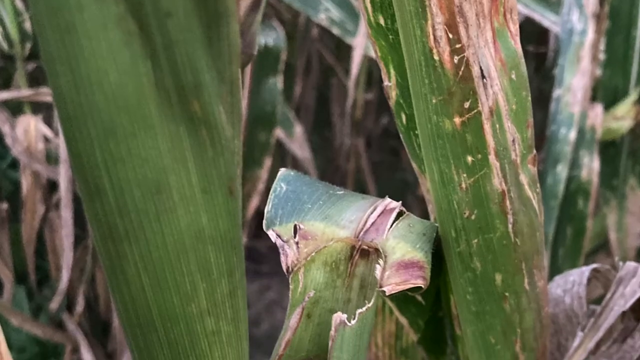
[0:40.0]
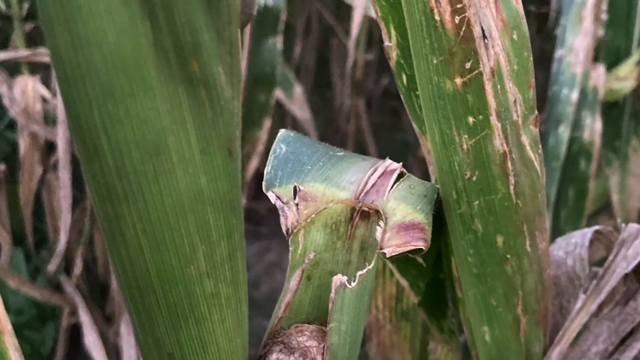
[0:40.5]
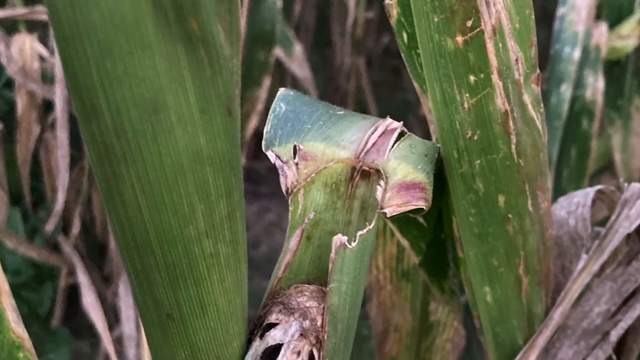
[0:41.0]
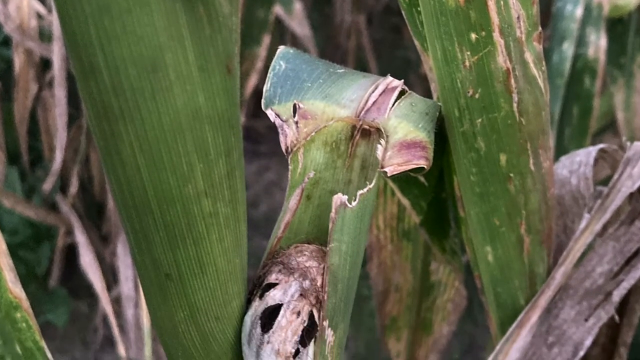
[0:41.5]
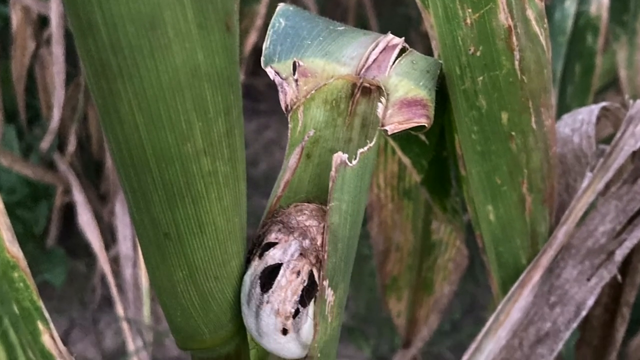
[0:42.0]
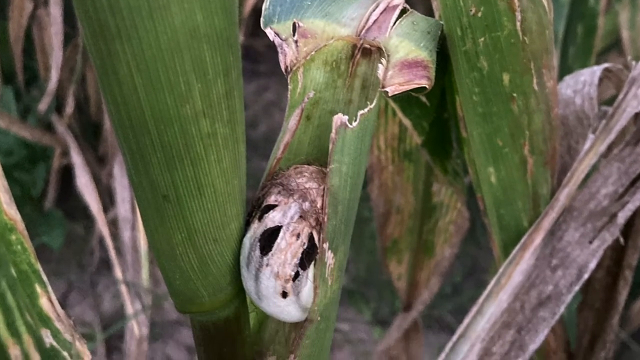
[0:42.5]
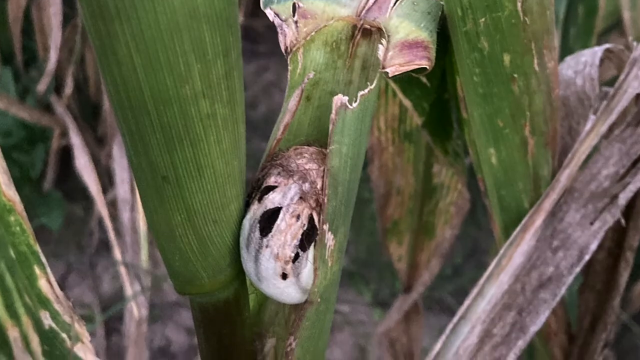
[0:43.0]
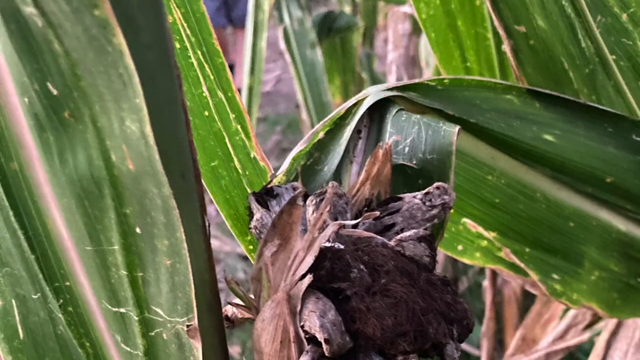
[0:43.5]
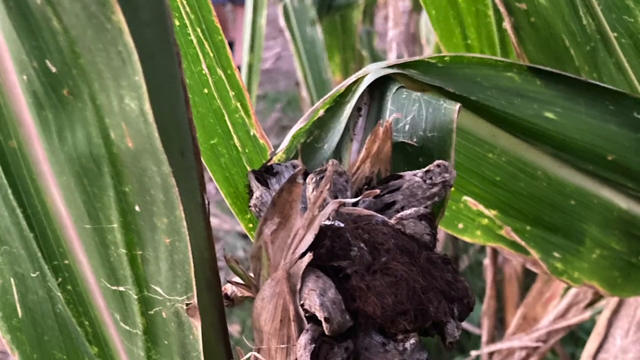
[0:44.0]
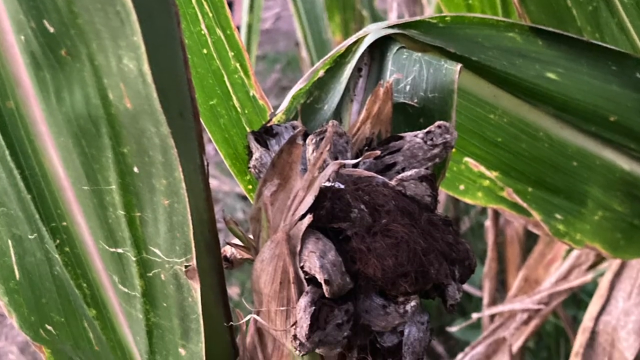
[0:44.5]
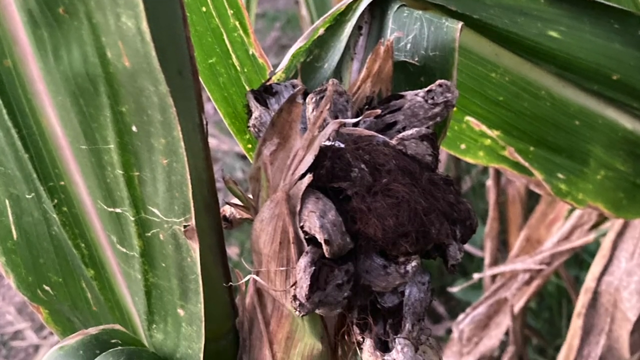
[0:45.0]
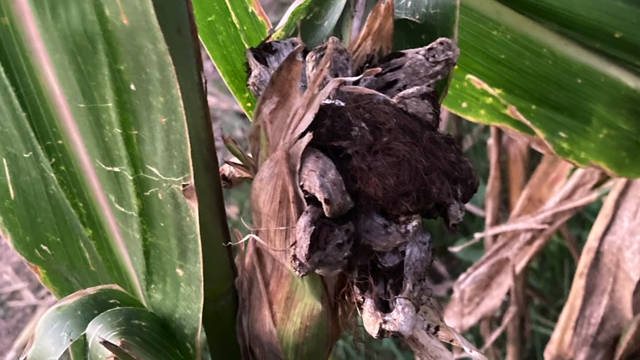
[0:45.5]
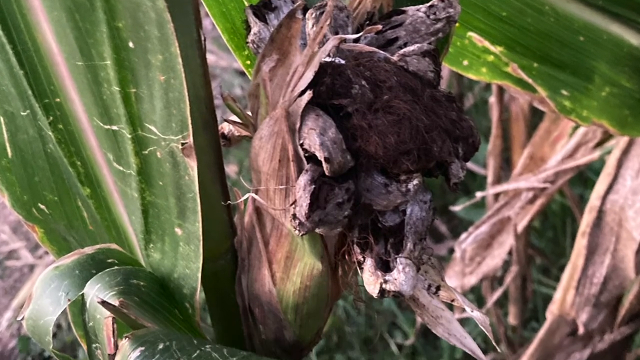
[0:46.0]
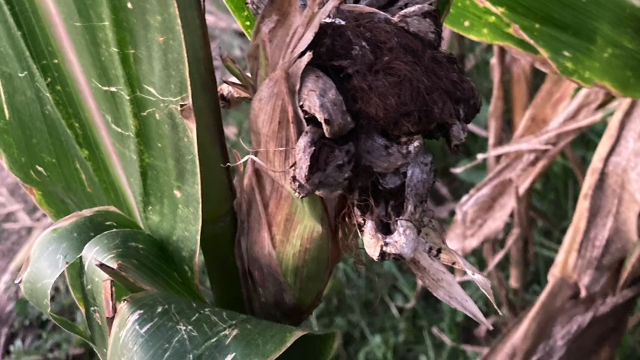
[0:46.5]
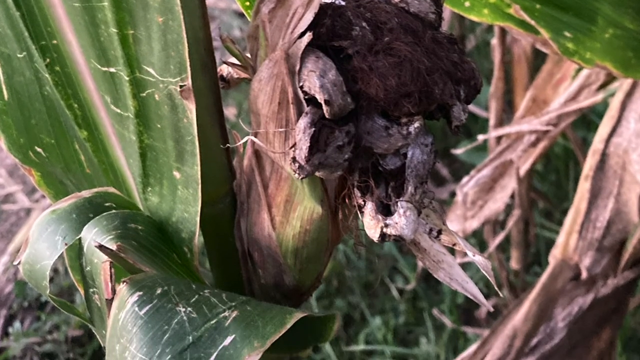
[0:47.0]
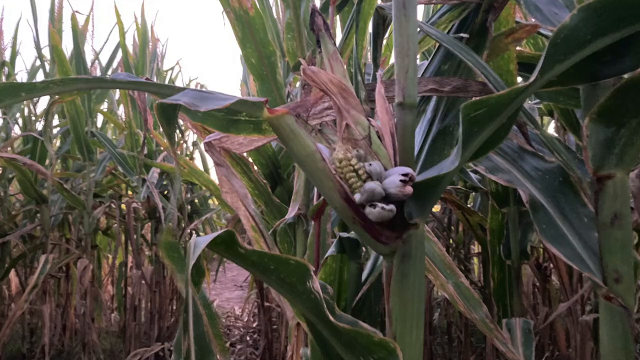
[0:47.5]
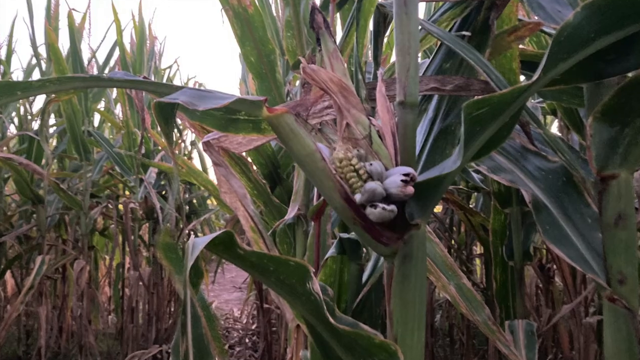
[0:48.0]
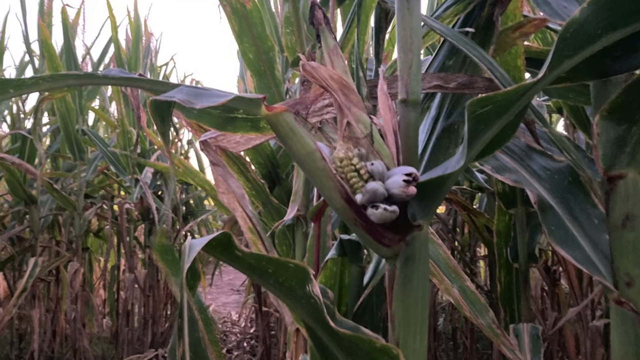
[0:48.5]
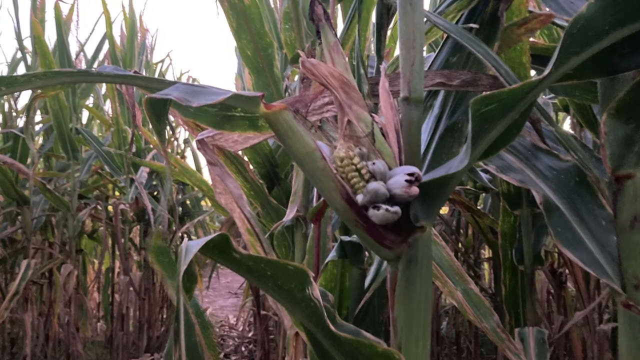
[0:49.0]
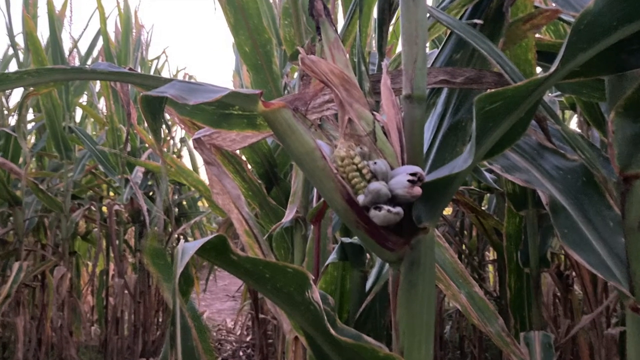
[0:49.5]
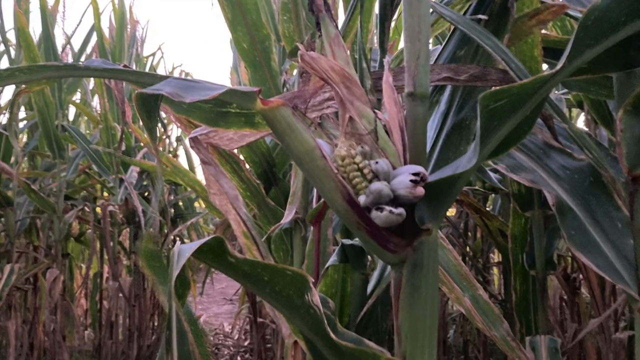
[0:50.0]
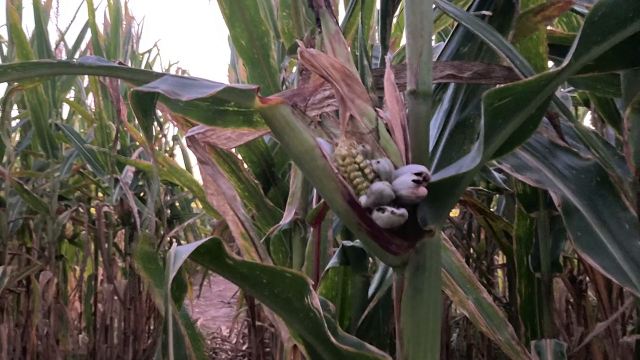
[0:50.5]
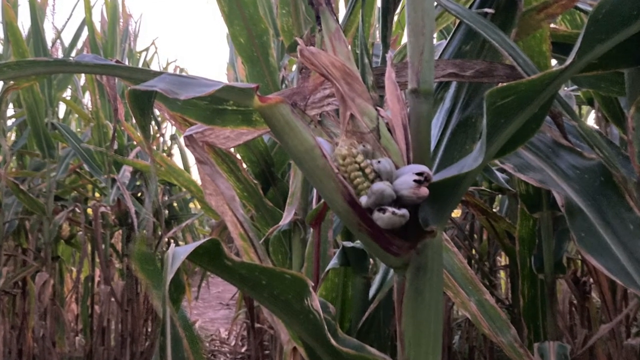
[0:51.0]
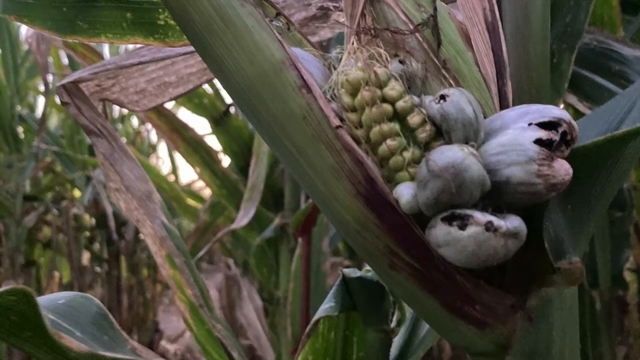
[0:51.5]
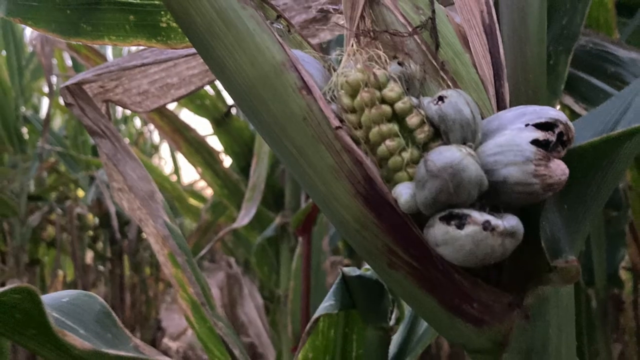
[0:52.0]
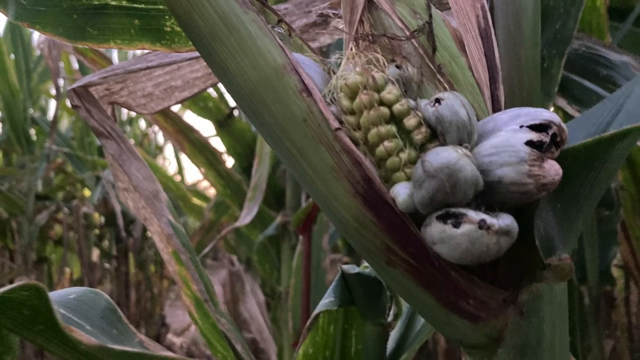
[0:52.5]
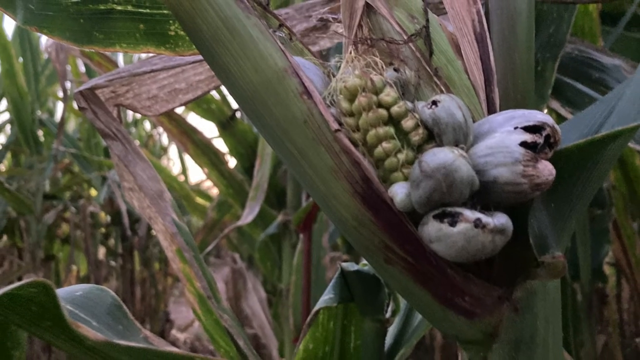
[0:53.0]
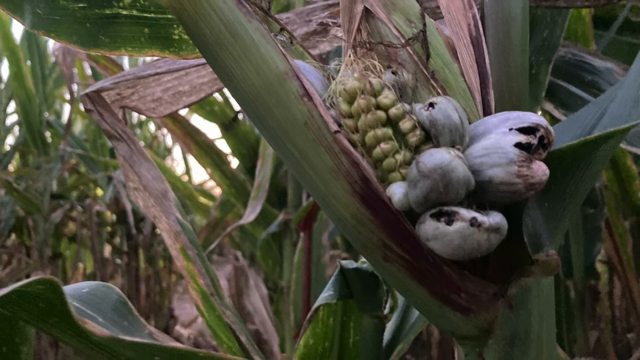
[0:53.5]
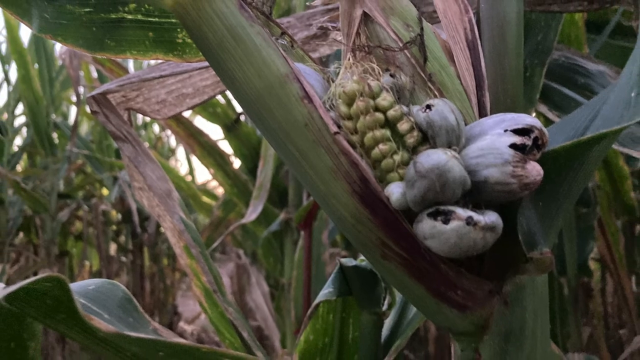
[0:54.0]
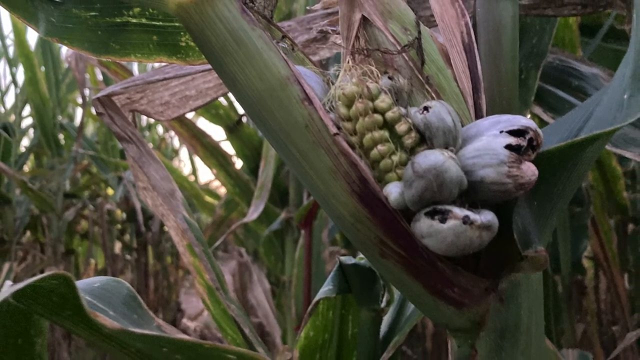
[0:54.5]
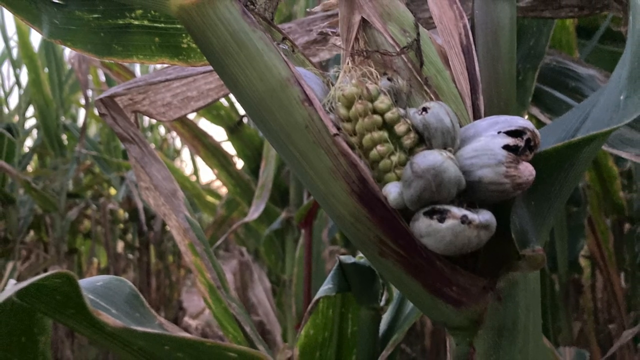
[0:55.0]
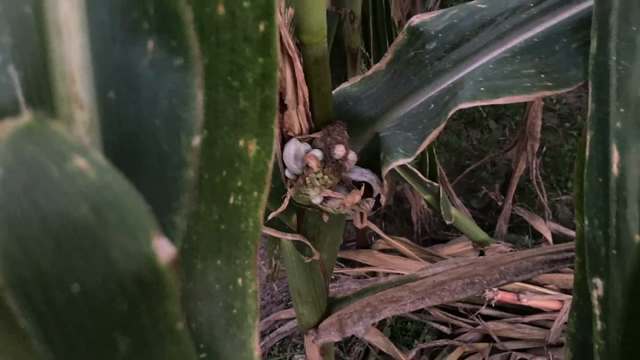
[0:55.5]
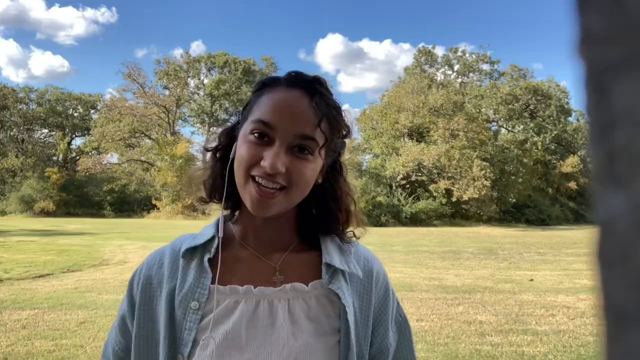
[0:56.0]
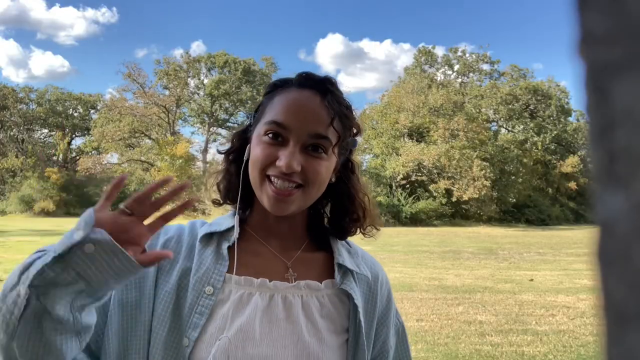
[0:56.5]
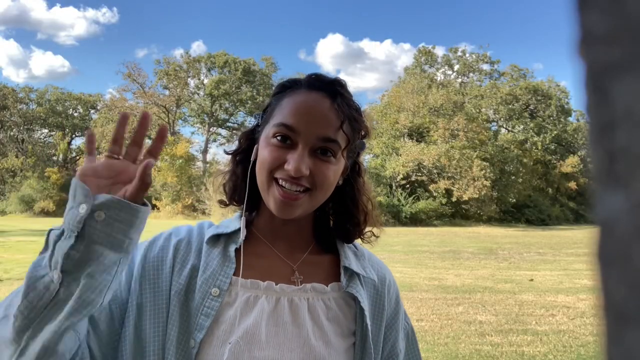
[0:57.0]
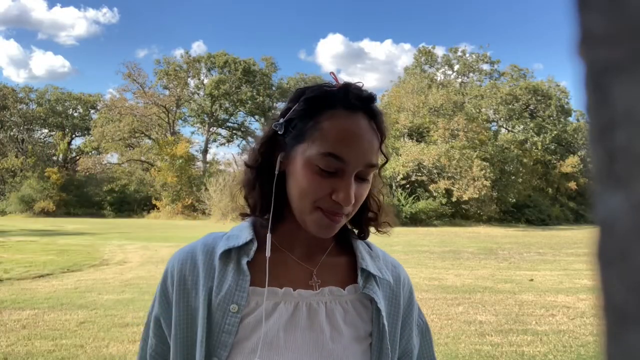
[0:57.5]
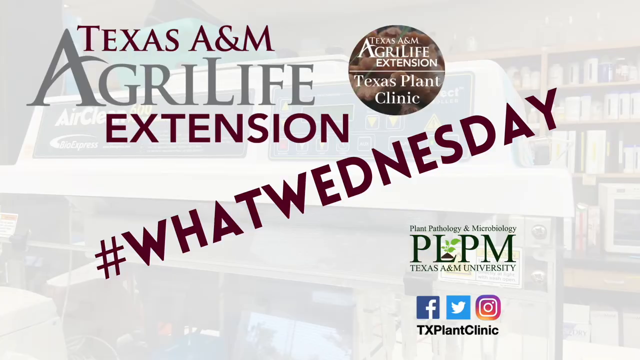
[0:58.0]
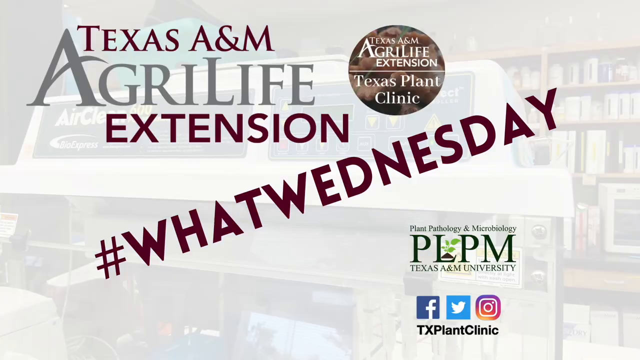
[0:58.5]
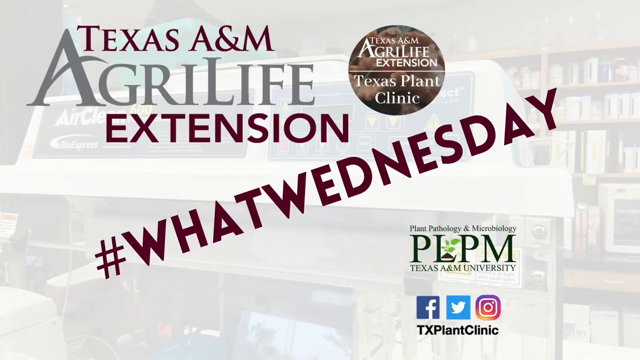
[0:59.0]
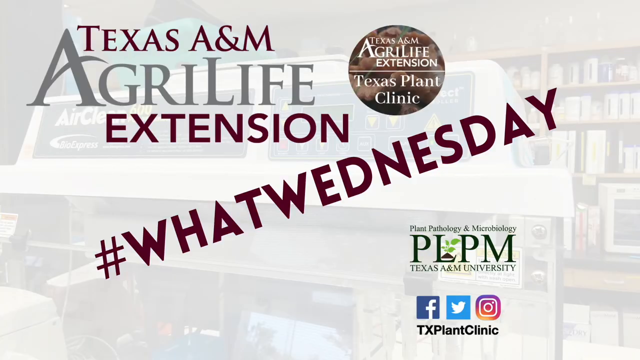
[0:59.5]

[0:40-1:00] The view returns to the corn. Parts of it look as though they have been ripped out, and there appear to be giant growths on it. The corn looks as if it has shriveled up and rotted where it stands, and in other spots grayish white material appears to have burst out of the corn, as if it rotted from the inside and exploded outward. The young woman then appears on camera again as the video ends.